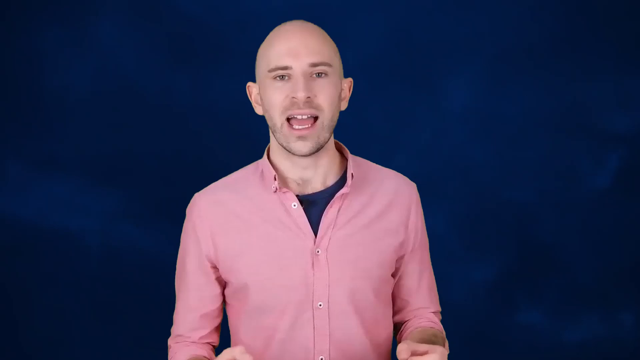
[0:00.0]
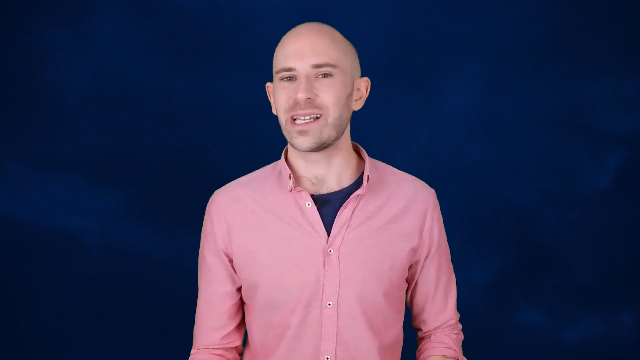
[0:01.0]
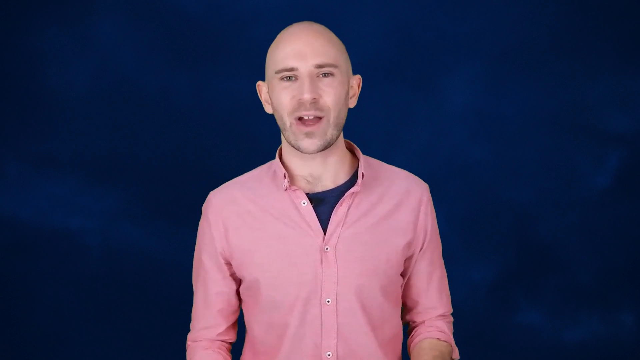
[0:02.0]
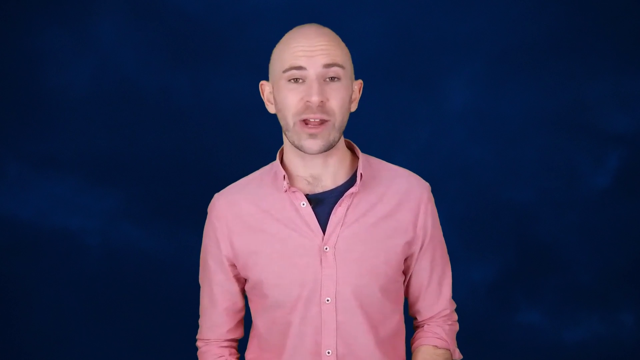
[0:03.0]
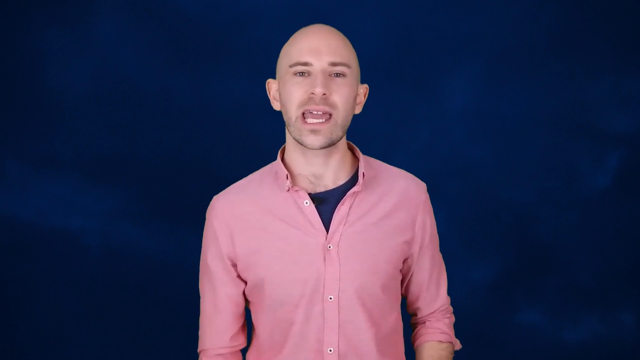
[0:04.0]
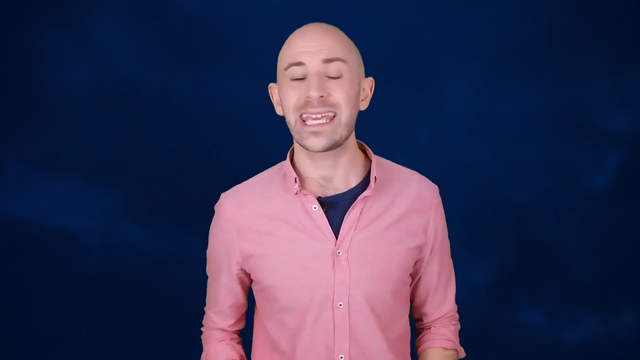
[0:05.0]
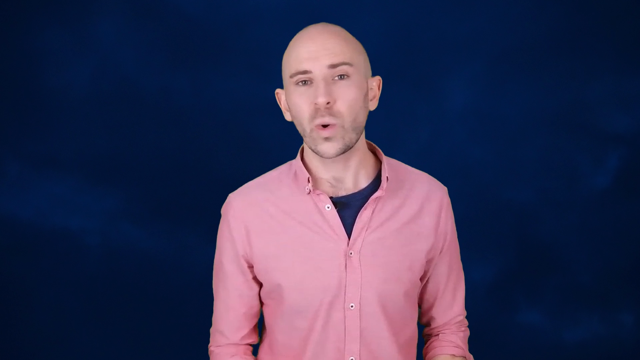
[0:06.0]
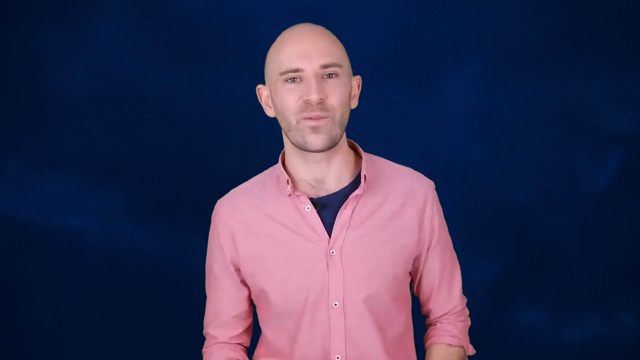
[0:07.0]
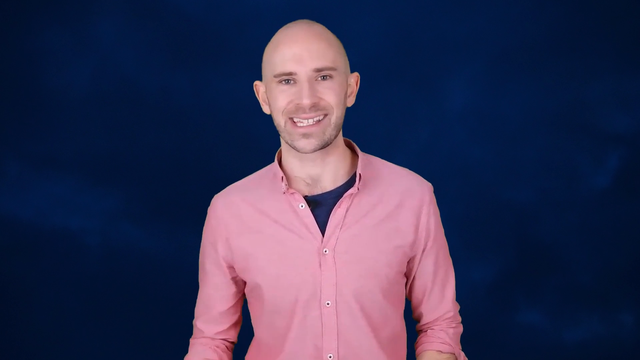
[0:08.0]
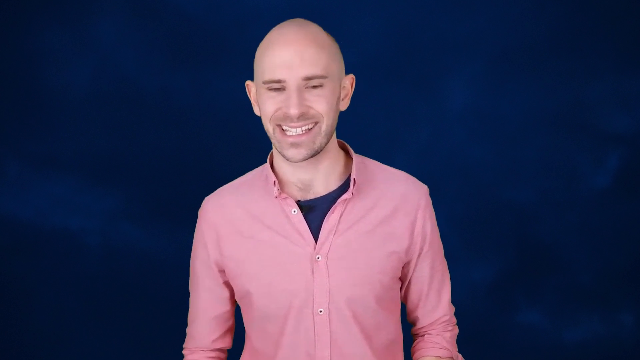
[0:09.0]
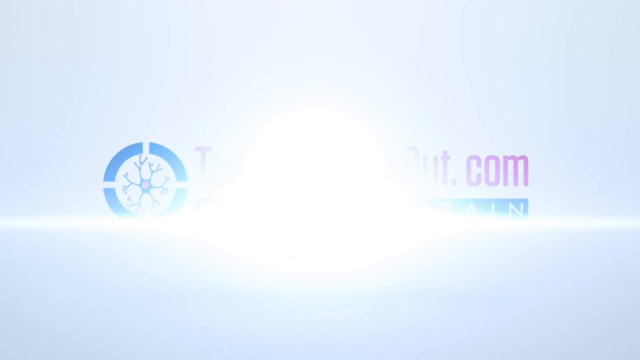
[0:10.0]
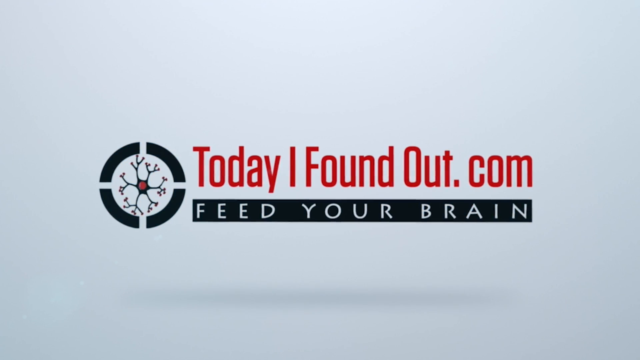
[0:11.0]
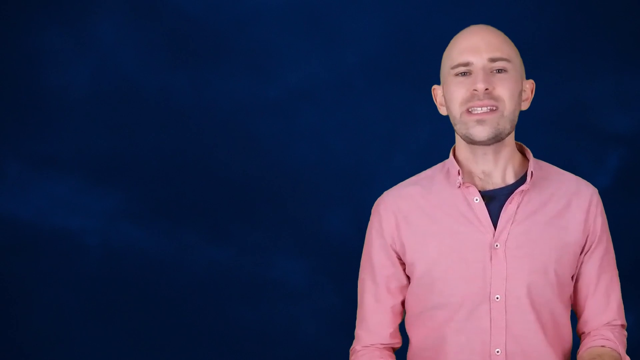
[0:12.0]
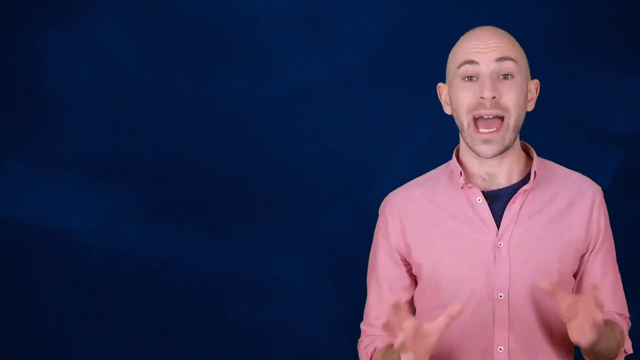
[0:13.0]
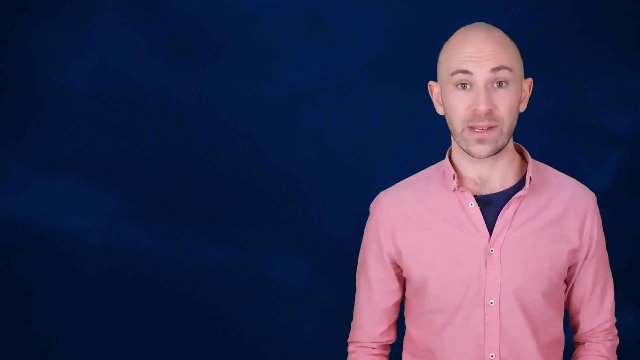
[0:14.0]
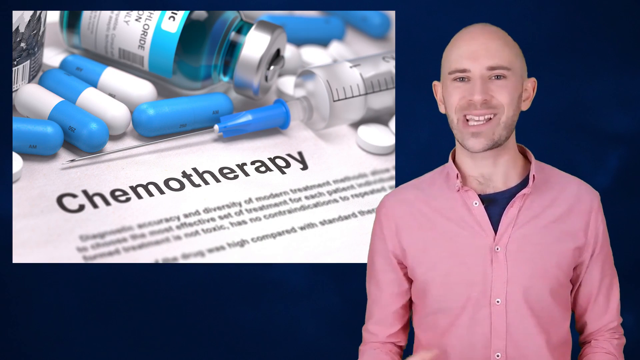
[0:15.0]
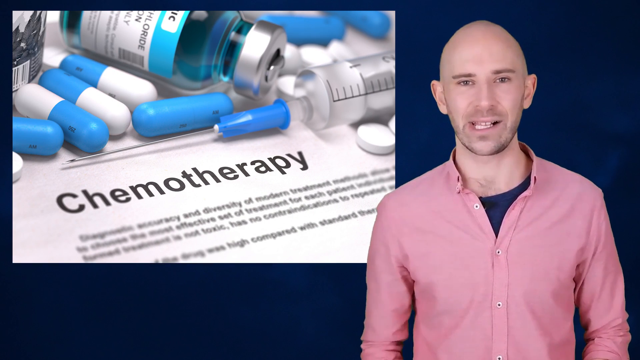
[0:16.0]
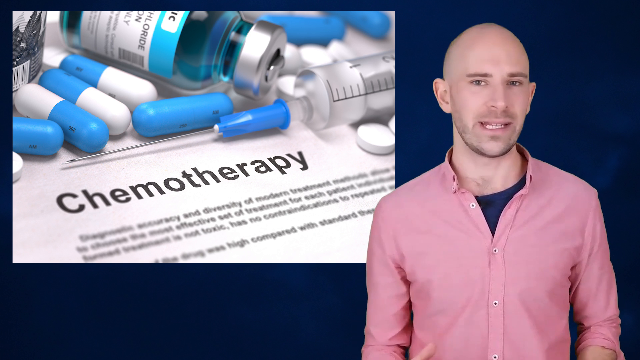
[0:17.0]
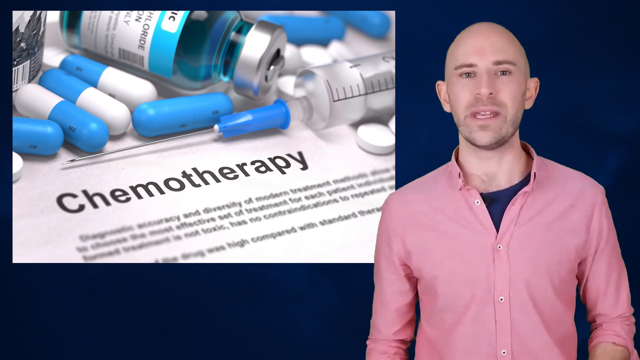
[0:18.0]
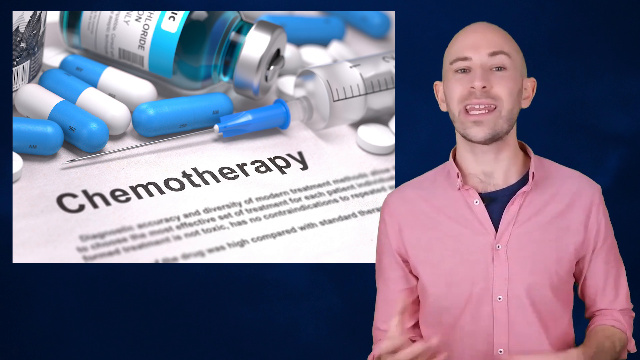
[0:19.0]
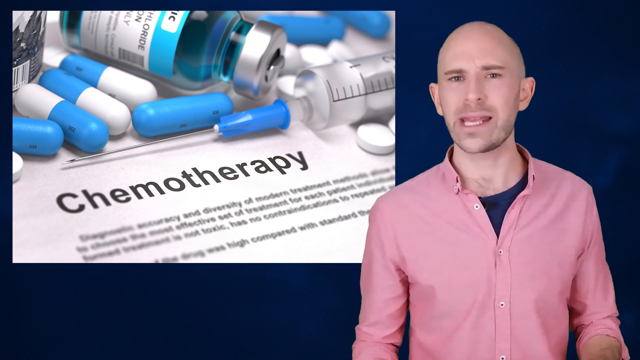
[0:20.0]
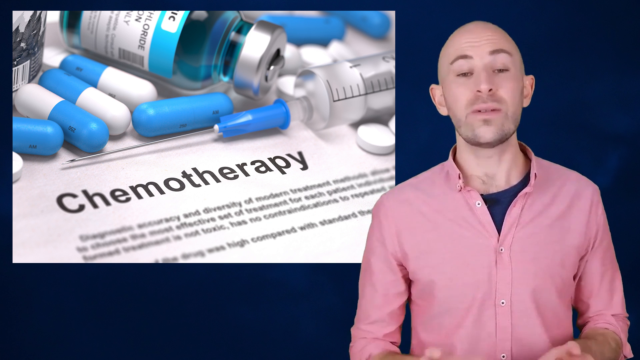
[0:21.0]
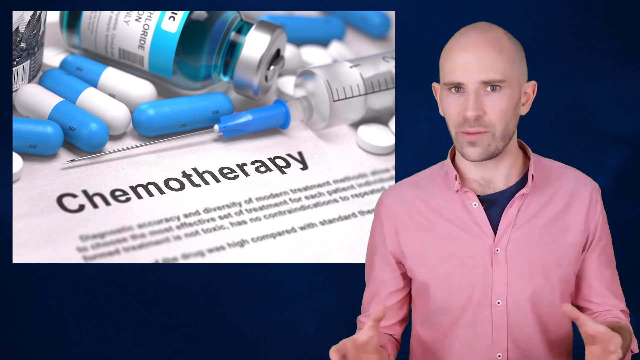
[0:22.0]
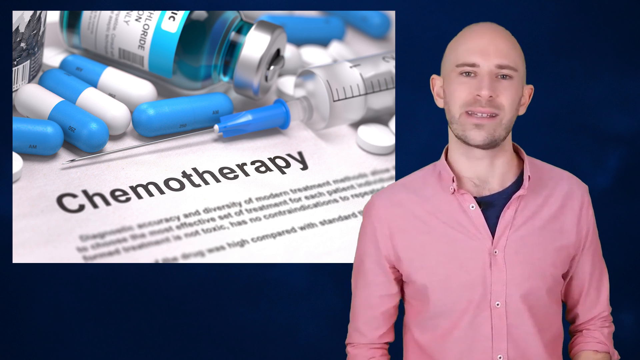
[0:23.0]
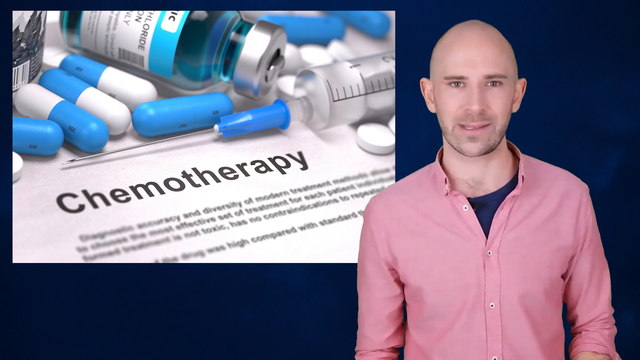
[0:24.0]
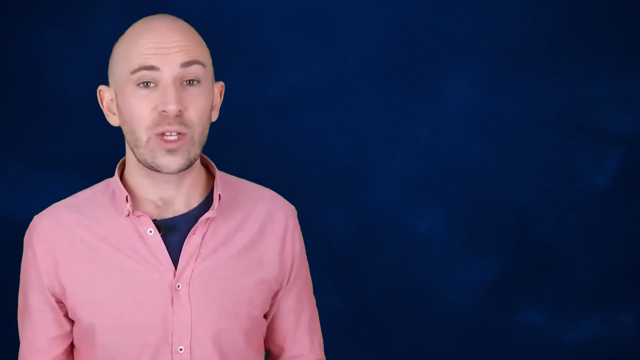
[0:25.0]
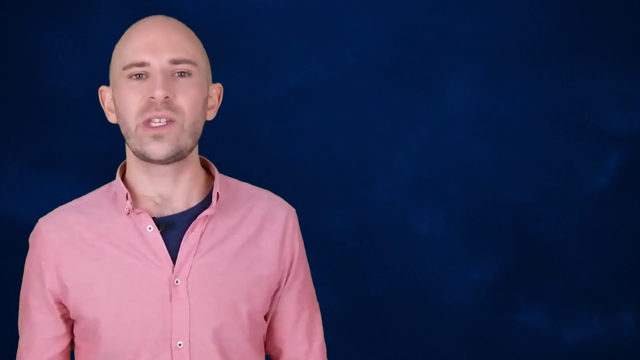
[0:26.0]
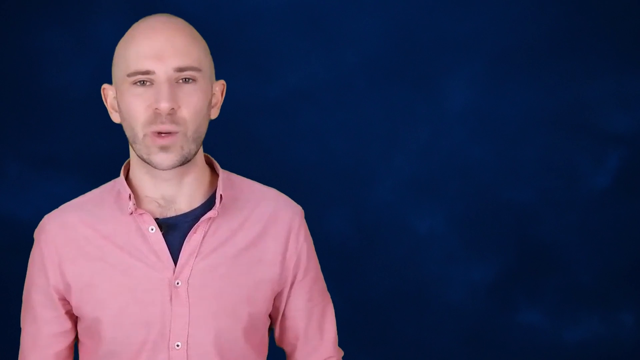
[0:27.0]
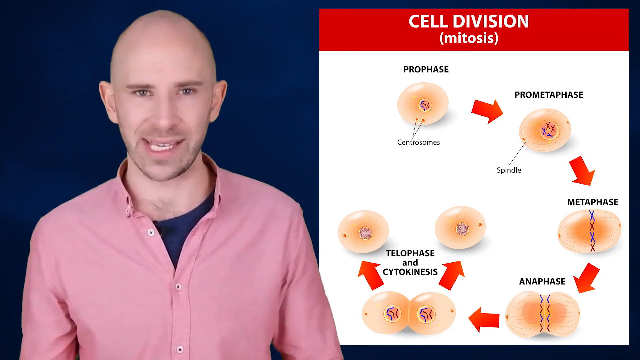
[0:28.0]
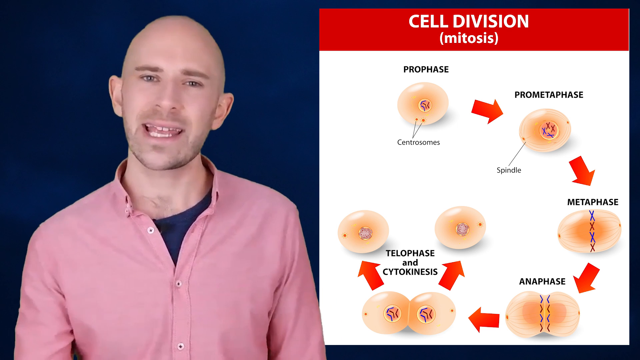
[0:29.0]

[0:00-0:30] A bald-headed man wearing a pink shirt with a black t-shirt underneath stands with his head bowed in front of a blue background. His hands move as he communicates. The video transitions to a circle logo with various stamps sprouting out of it, and a website reading "today I found out.com" written in red, with "feed your brain" underneath. The video then returns to the man as he continues to communicate. On the left side is an image of a syringe with a needle and blue and white pills, with the word "chemotherapy" written by the needle. Another image then appears on the right of the screen, showing "cell division" written in white with "mitosis" underneath, also in white.